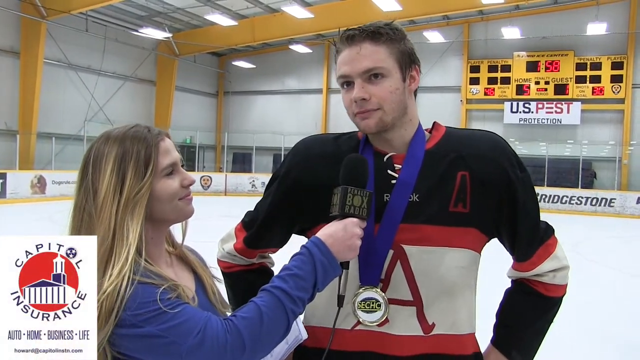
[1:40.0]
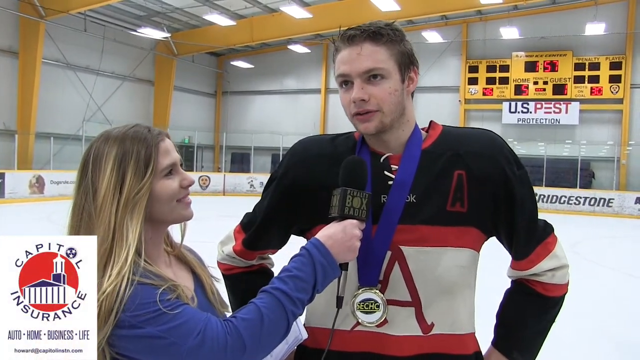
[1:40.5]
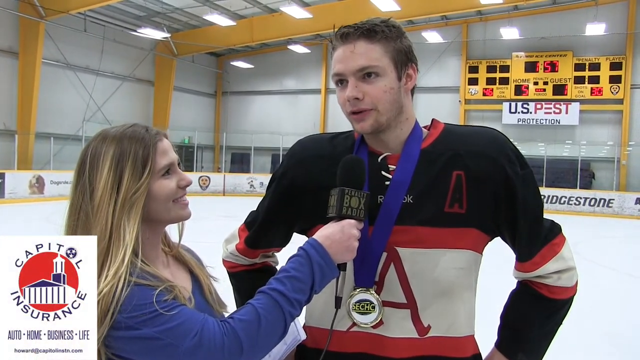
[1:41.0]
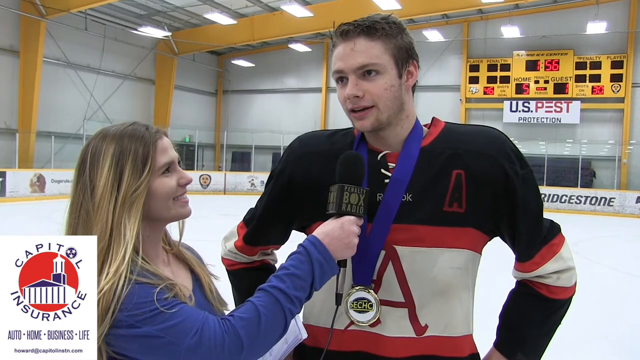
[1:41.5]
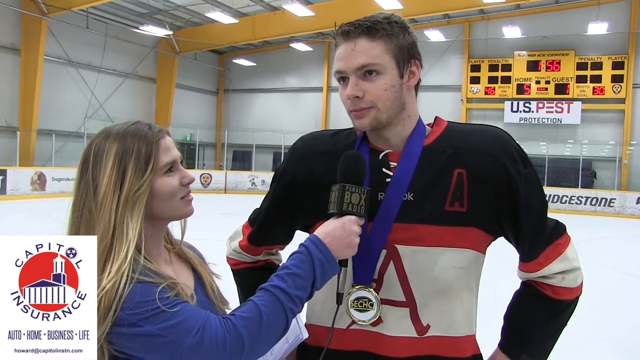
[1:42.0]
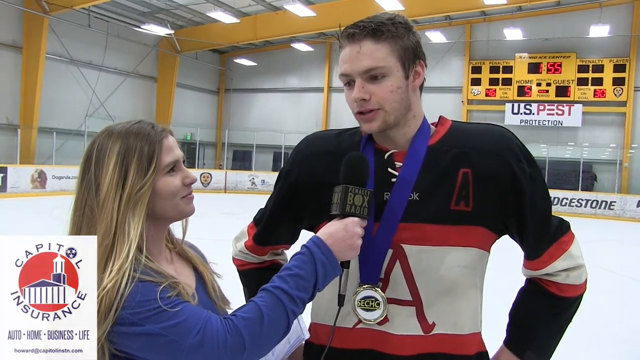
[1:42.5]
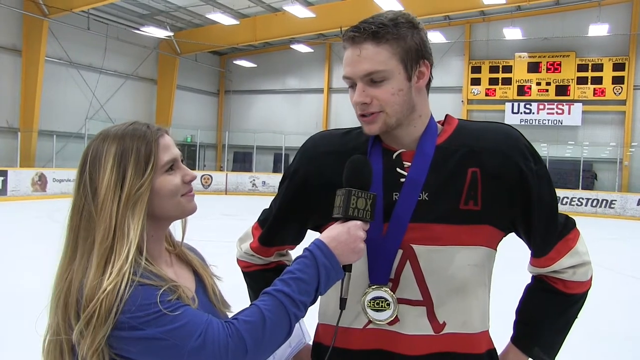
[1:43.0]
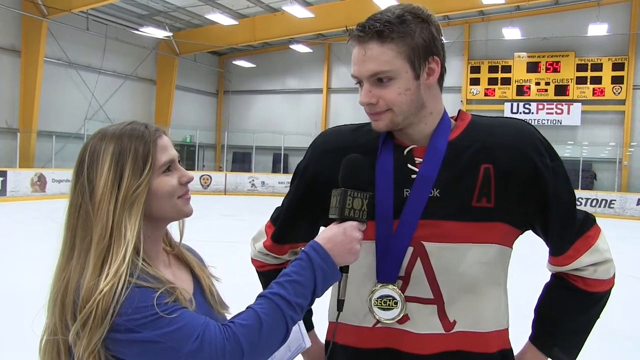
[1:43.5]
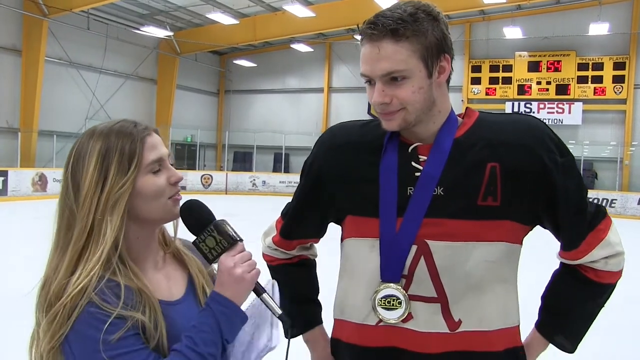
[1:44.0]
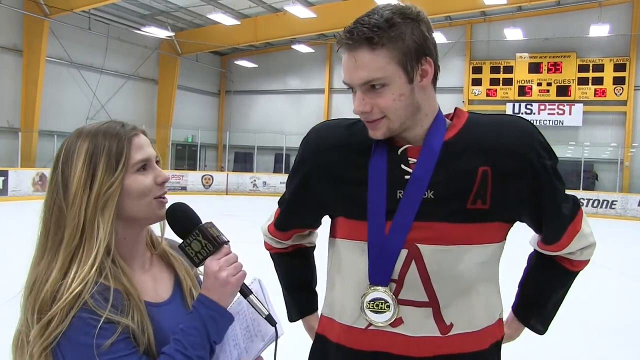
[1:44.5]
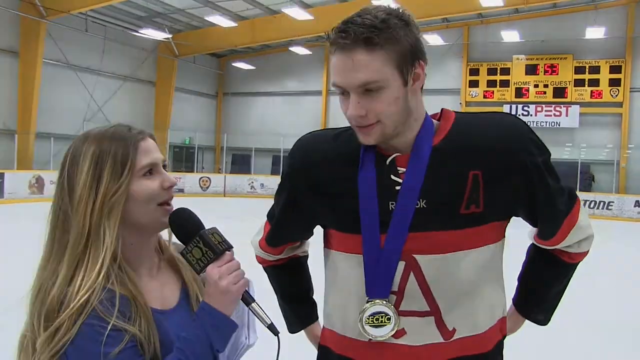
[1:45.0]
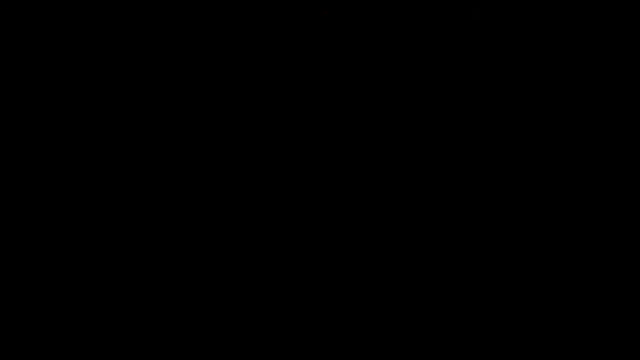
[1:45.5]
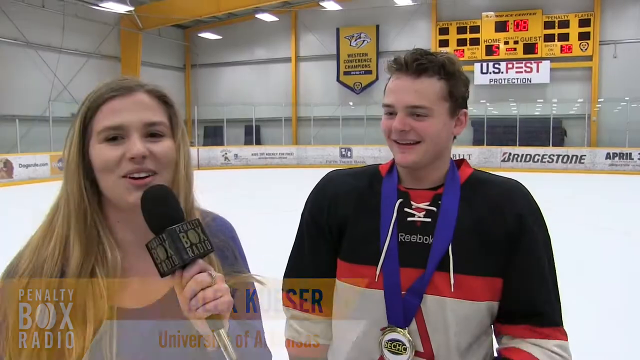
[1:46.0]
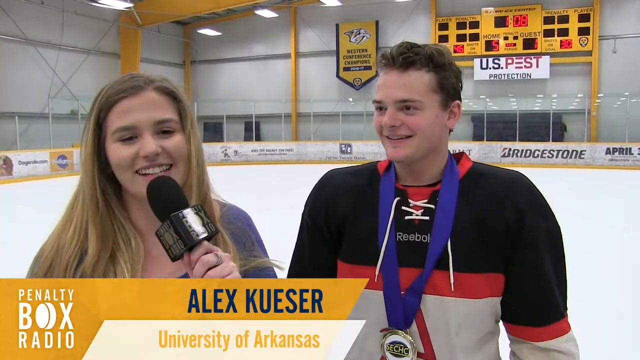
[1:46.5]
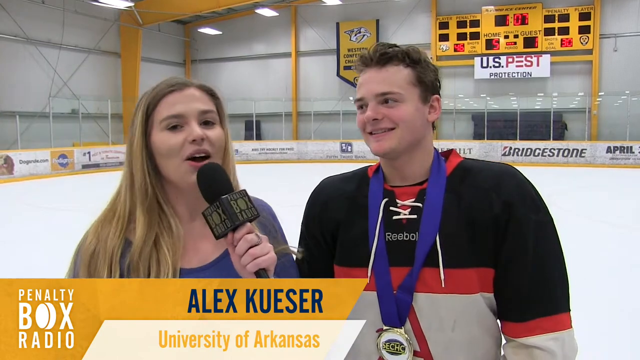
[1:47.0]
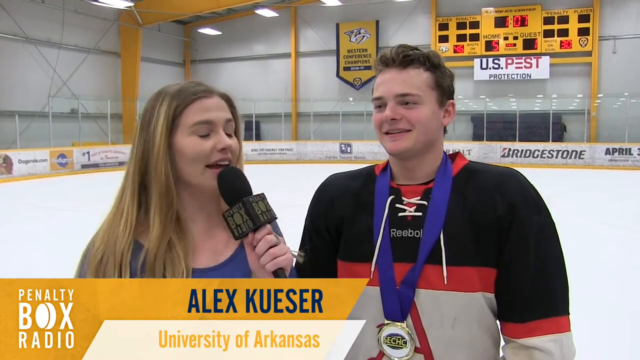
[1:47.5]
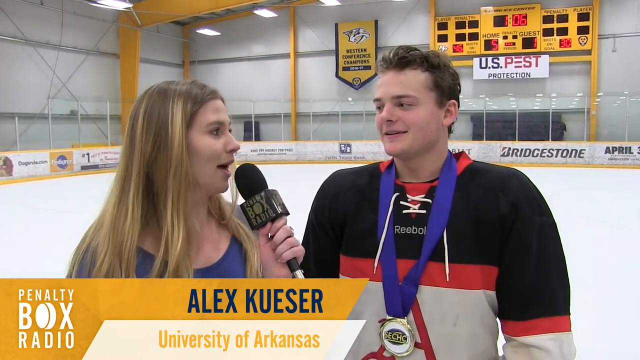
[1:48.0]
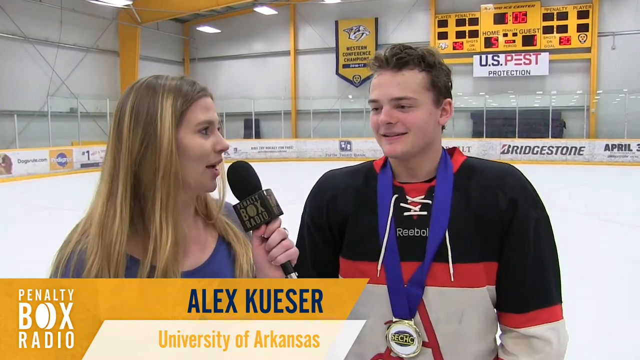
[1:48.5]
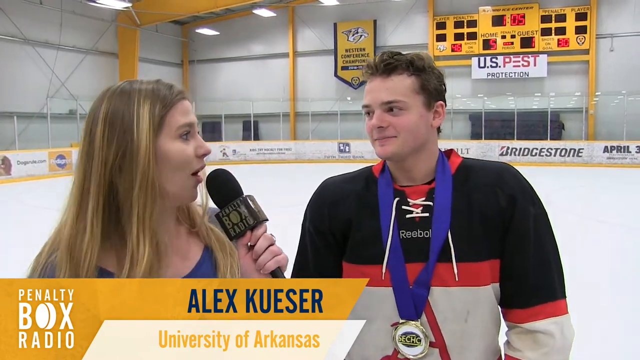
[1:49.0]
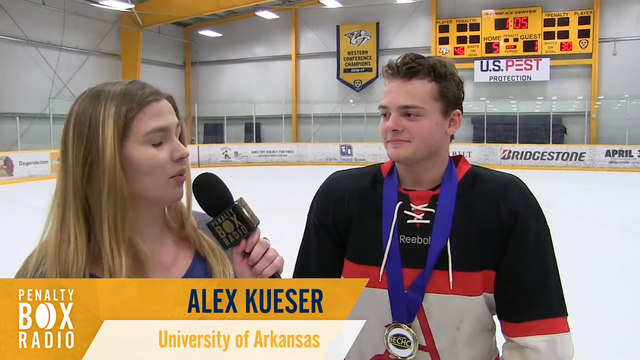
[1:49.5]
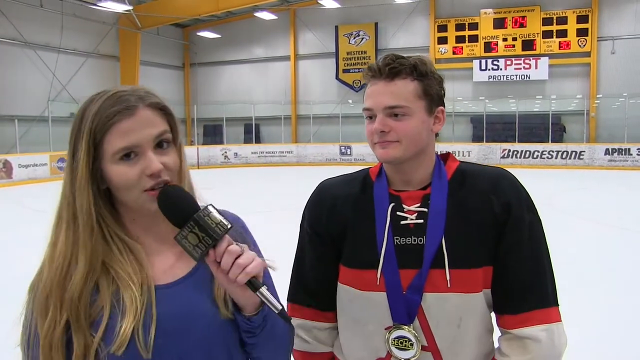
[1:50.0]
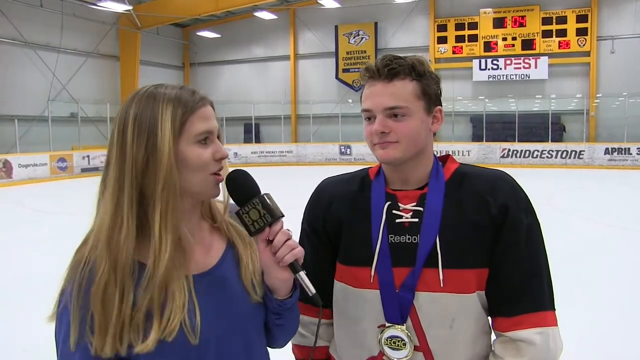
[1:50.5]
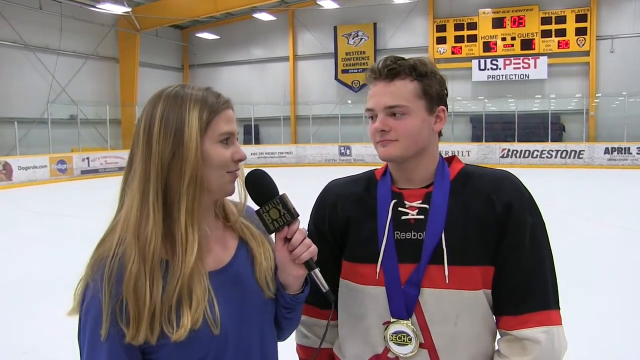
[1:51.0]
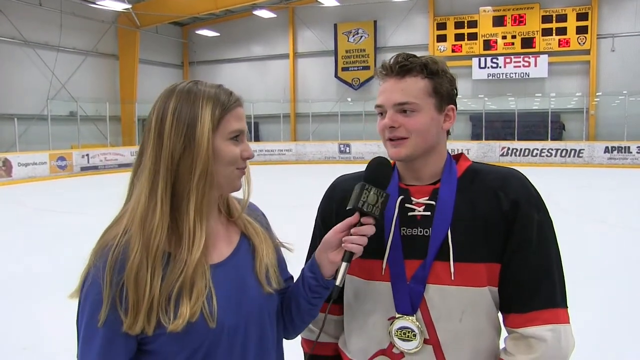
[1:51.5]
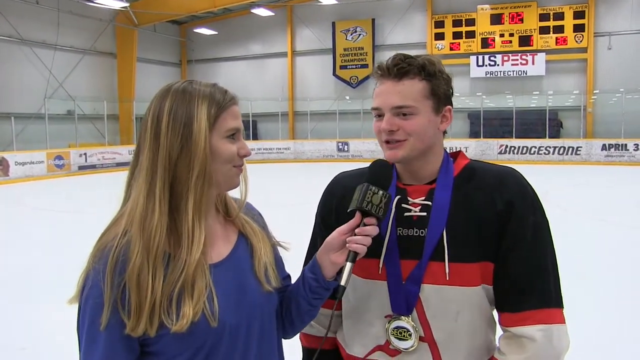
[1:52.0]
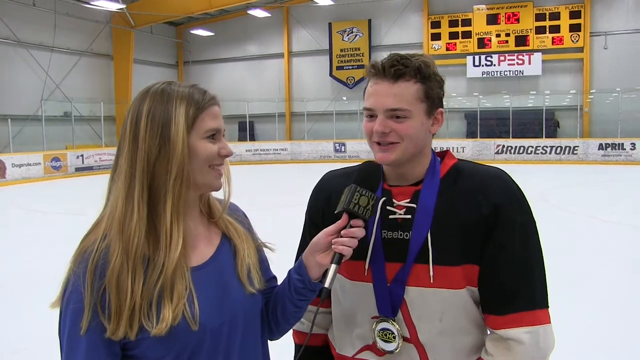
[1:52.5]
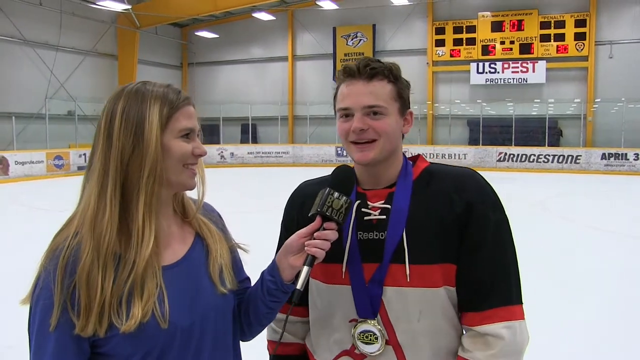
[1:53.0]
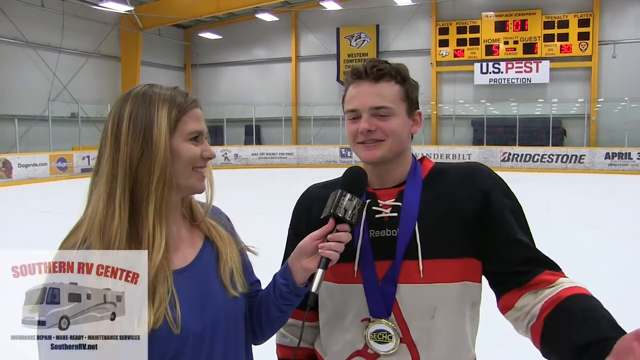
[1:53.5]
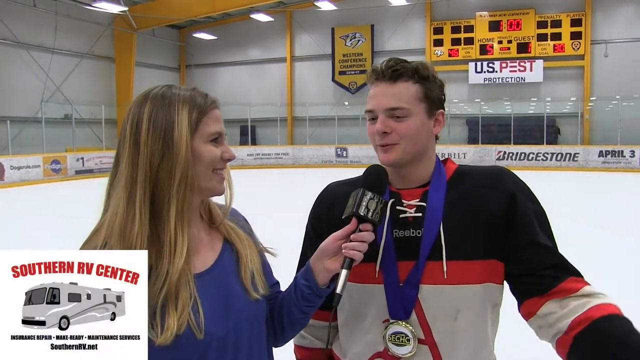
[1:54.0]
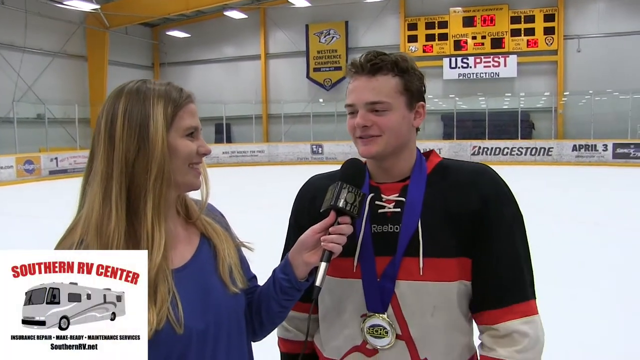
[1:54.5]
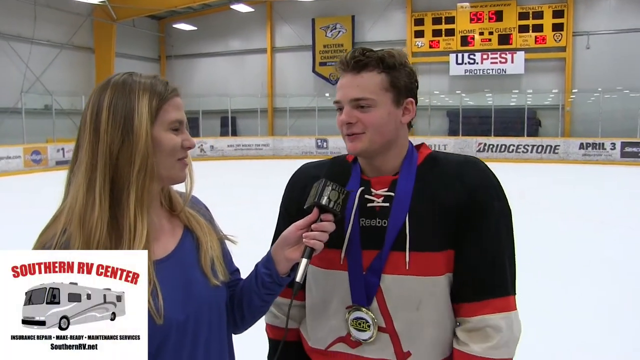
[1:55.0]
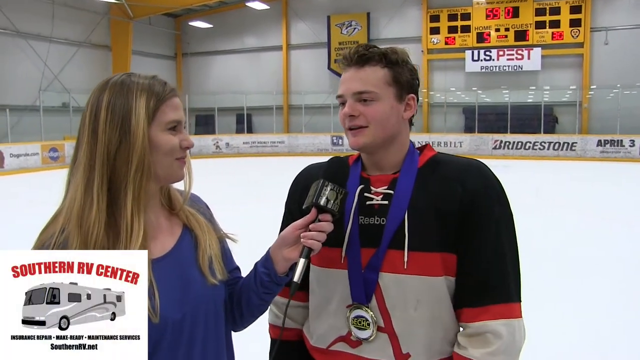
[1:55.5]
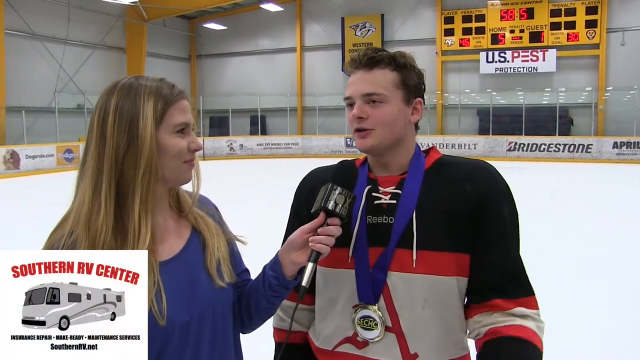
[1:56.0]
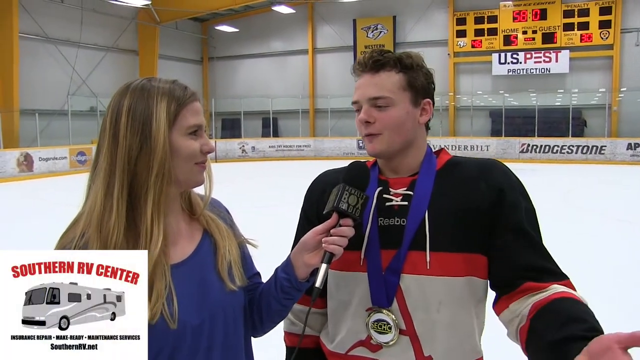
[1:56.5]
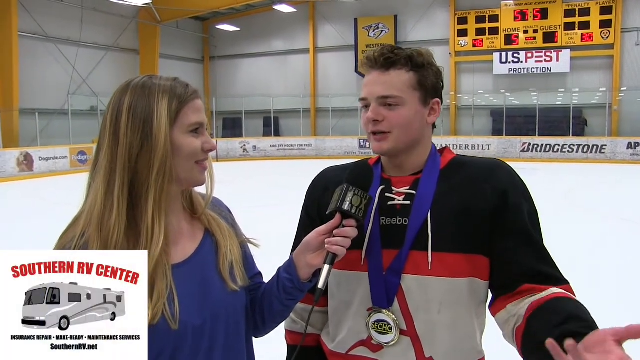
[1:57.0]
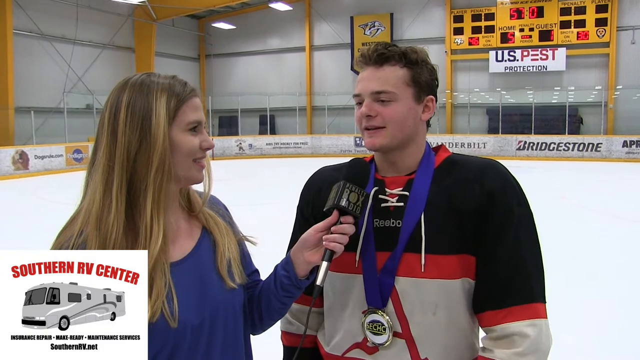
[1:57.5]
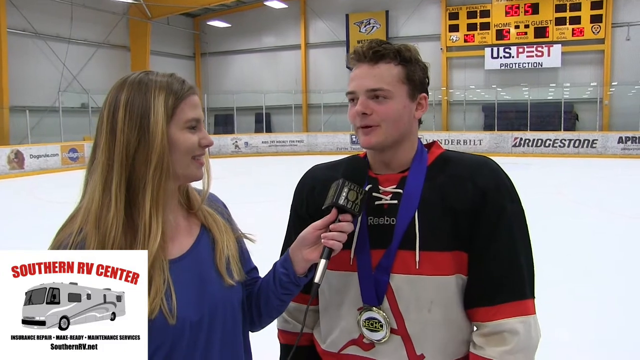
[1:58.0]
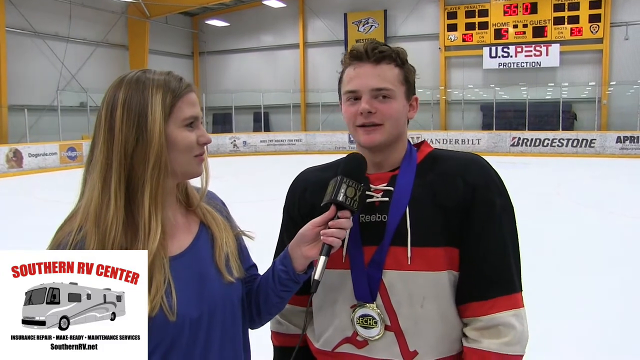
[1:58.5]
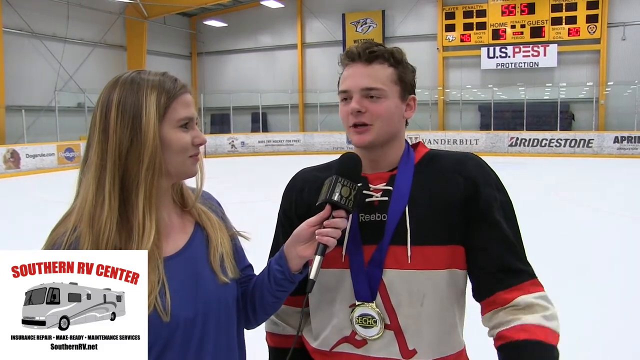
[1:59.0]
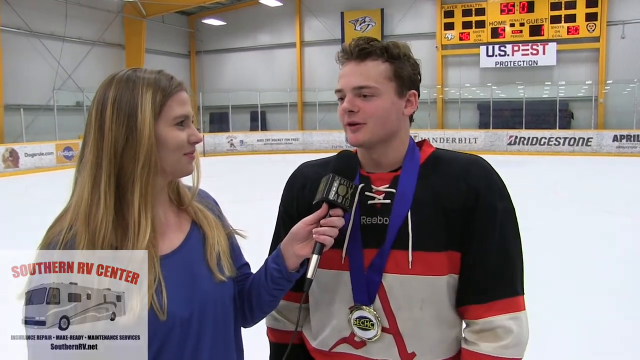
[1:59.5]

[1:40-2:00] A woman interviews a player and seems very entertained. The player is Alex, from the University of Arkansas. In the bottom left-hand corner of the screen is an advertisement for the "Southern RFE Center" with a small RFE. In the background is a clock, and under it a logo reading "US Pass Protection". The ceiling has yellow stripes in various areas, the walls are gray, and the rink is covered in ice.